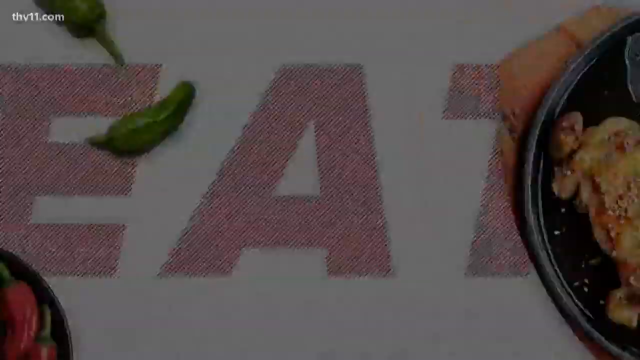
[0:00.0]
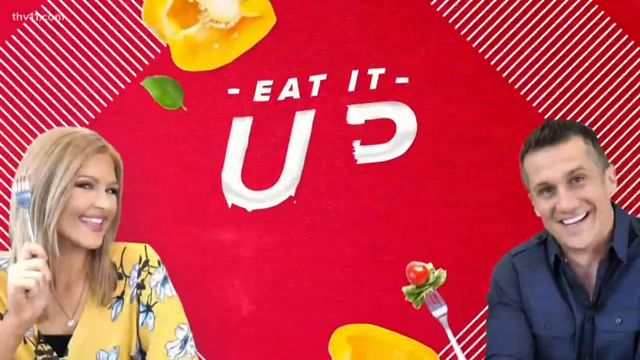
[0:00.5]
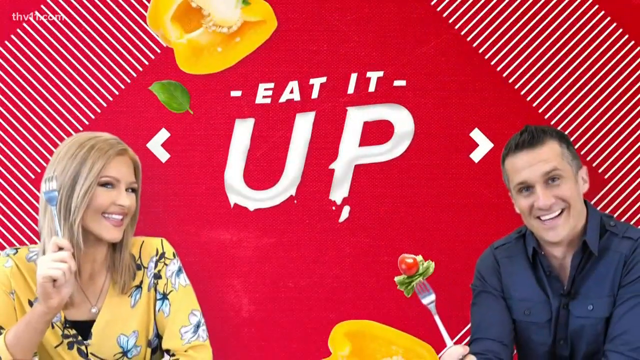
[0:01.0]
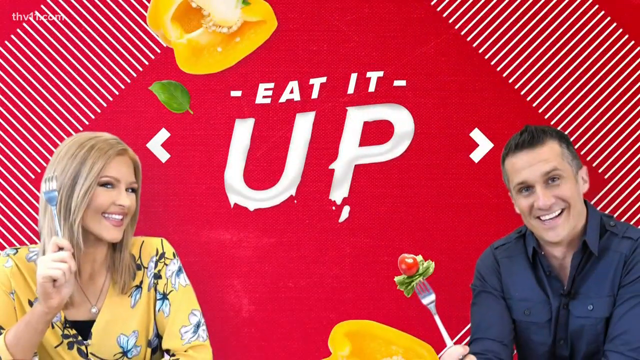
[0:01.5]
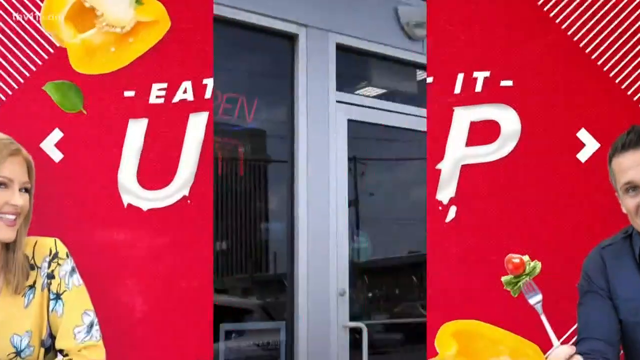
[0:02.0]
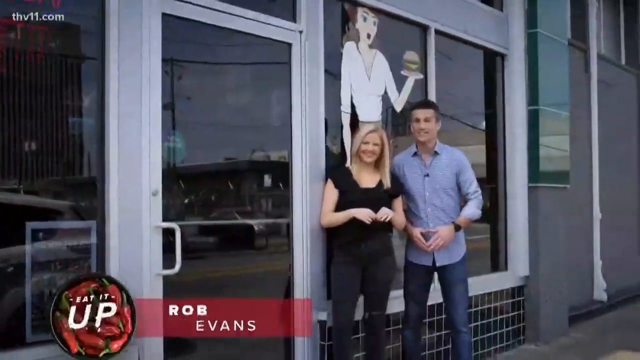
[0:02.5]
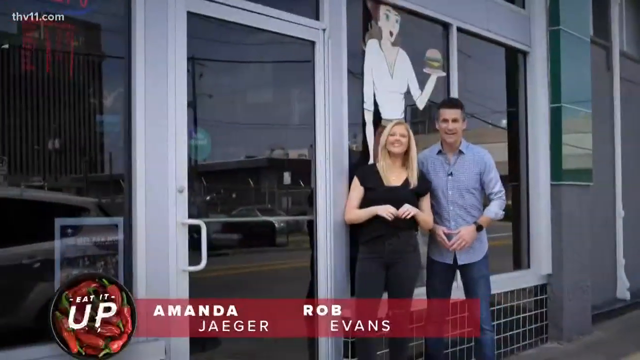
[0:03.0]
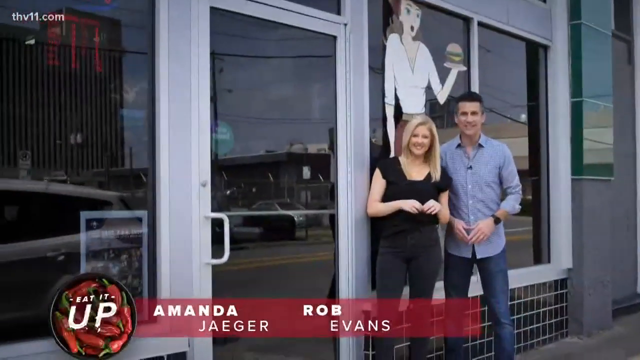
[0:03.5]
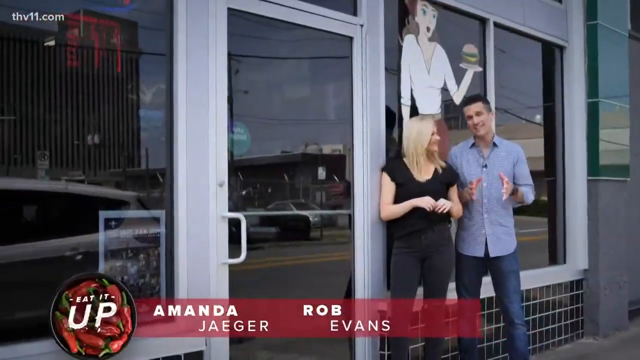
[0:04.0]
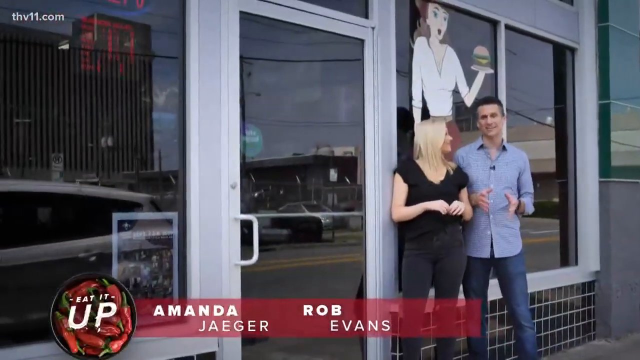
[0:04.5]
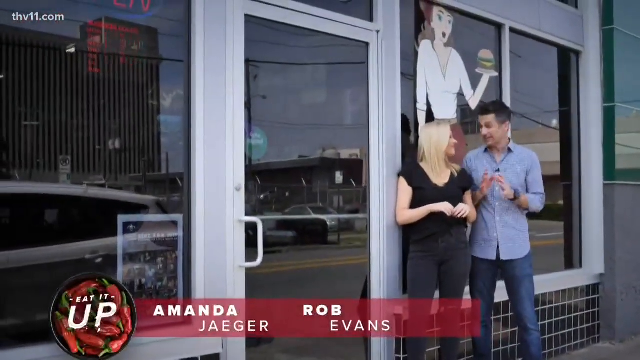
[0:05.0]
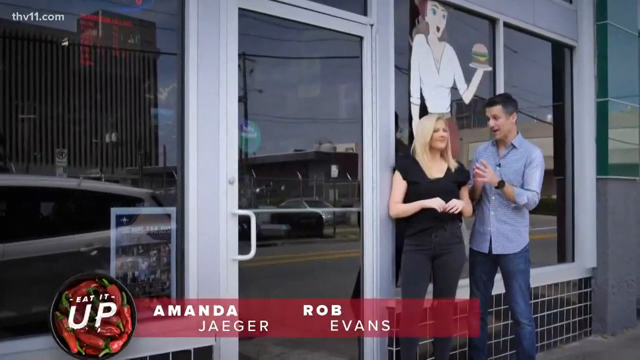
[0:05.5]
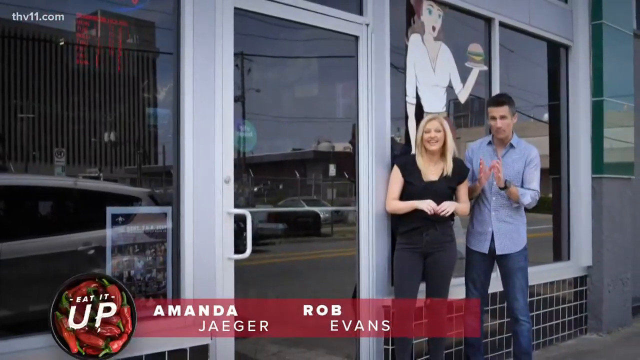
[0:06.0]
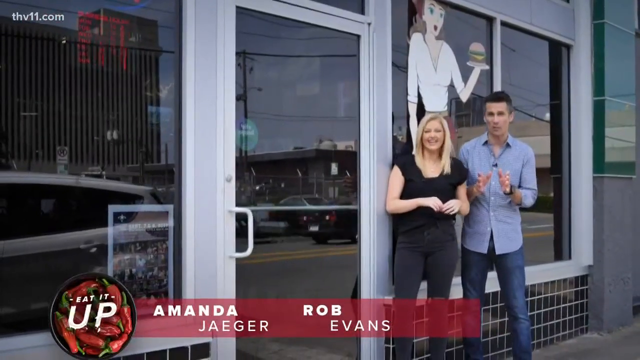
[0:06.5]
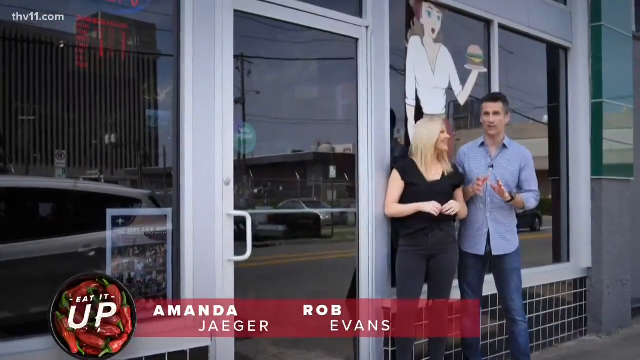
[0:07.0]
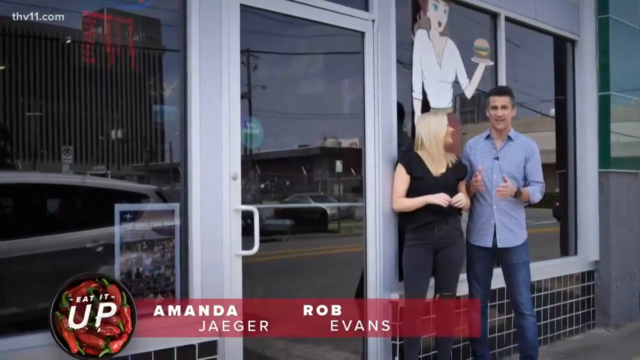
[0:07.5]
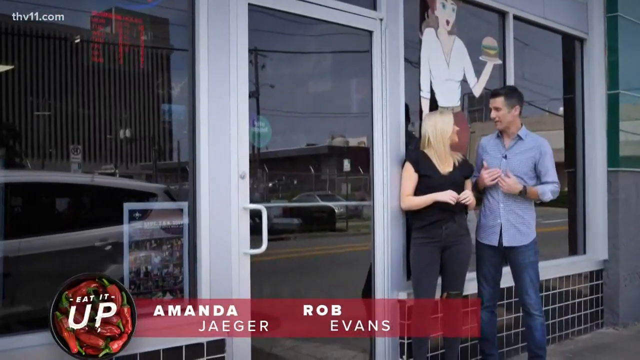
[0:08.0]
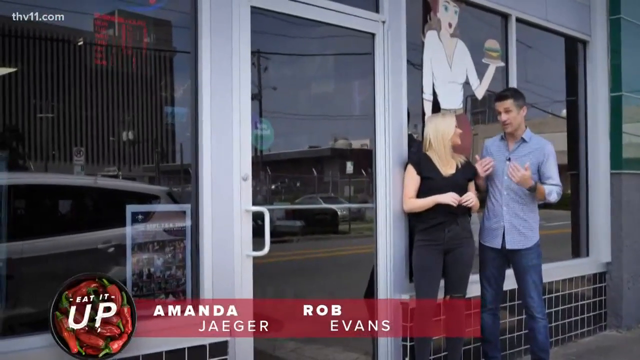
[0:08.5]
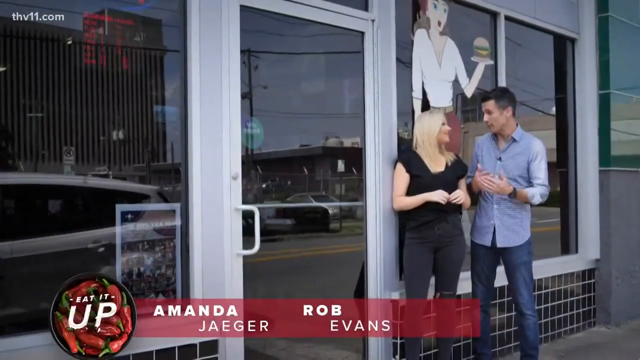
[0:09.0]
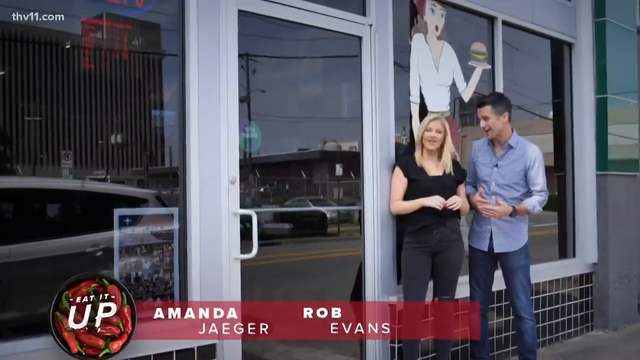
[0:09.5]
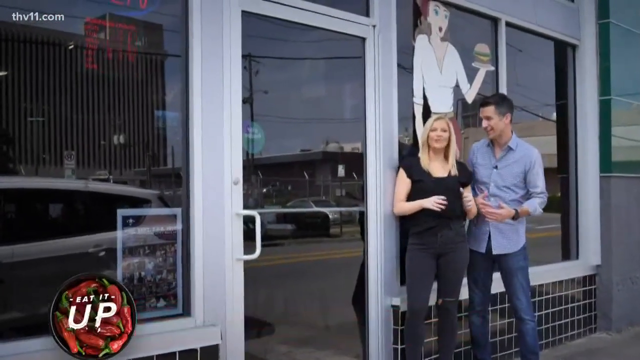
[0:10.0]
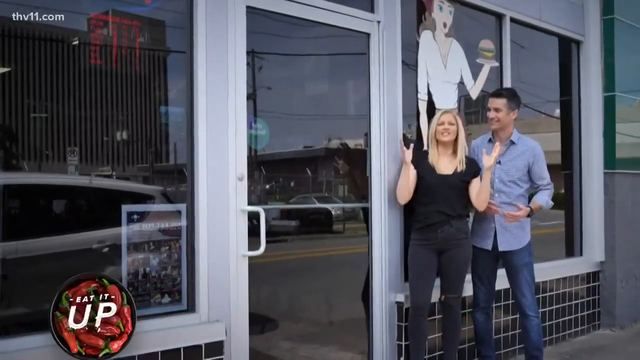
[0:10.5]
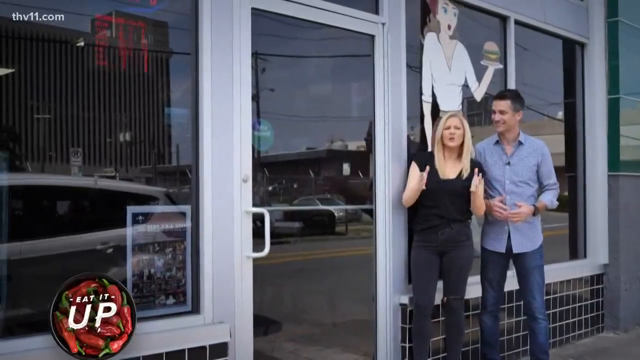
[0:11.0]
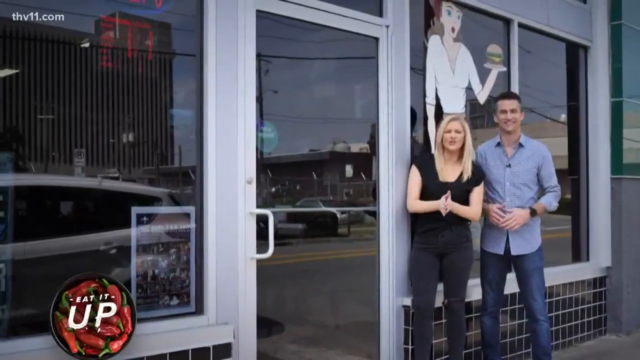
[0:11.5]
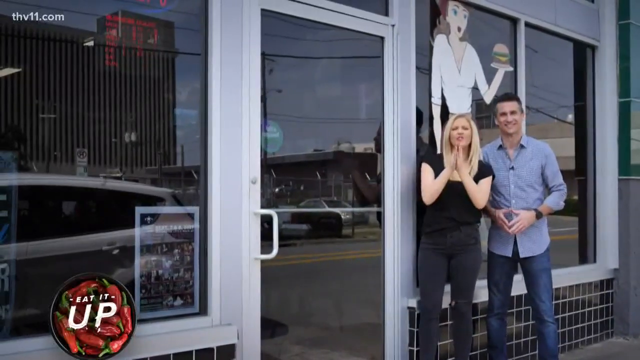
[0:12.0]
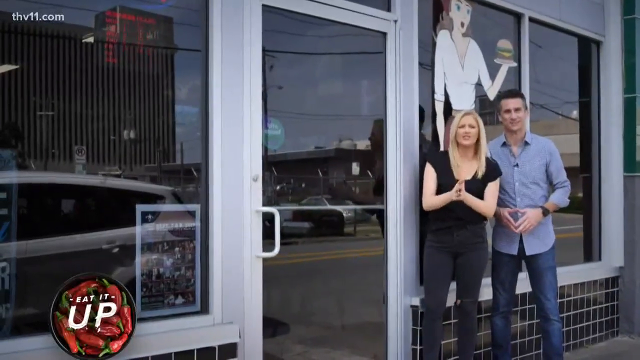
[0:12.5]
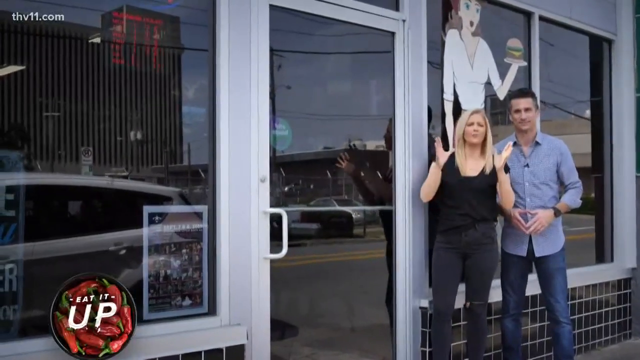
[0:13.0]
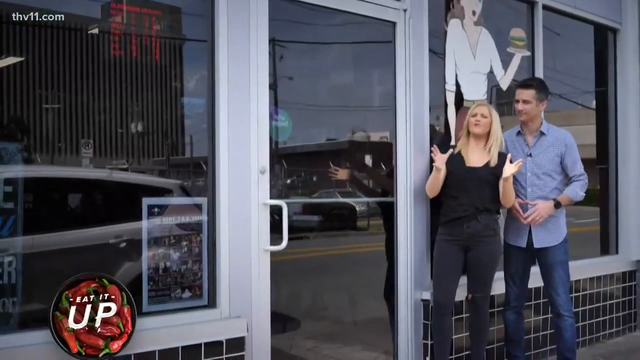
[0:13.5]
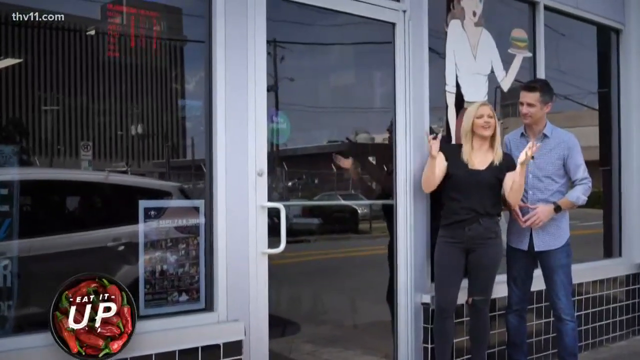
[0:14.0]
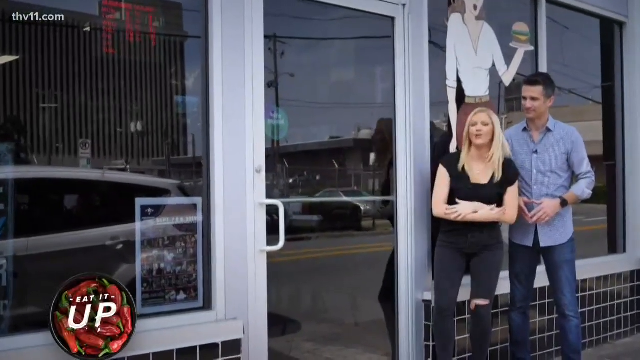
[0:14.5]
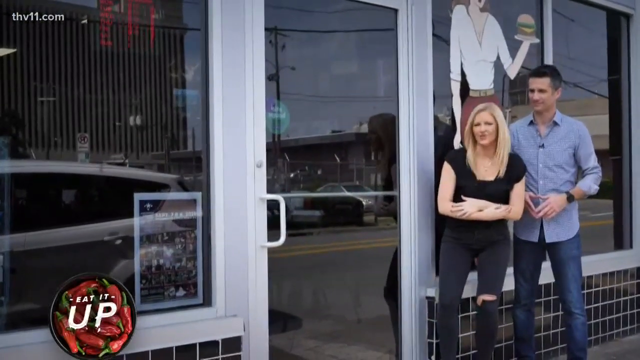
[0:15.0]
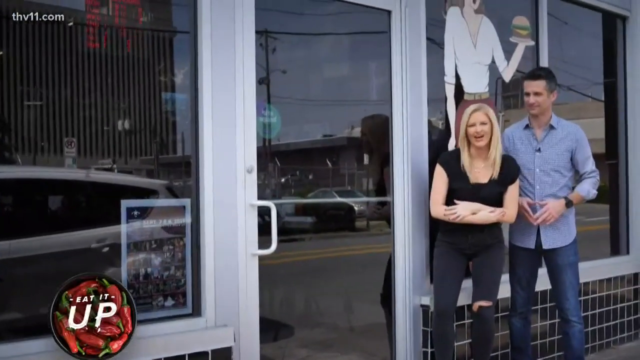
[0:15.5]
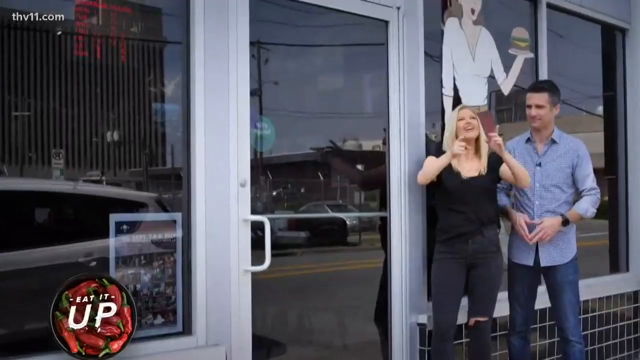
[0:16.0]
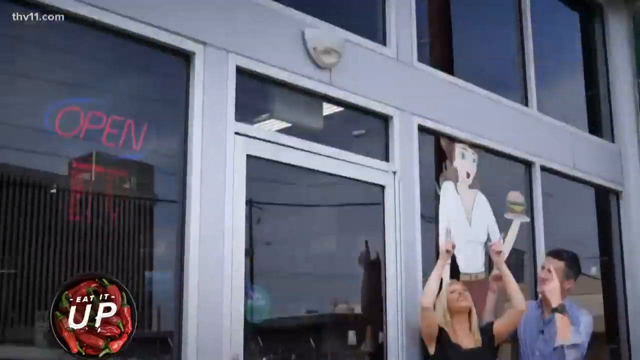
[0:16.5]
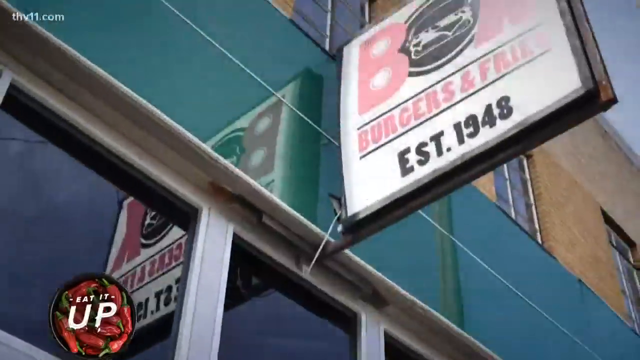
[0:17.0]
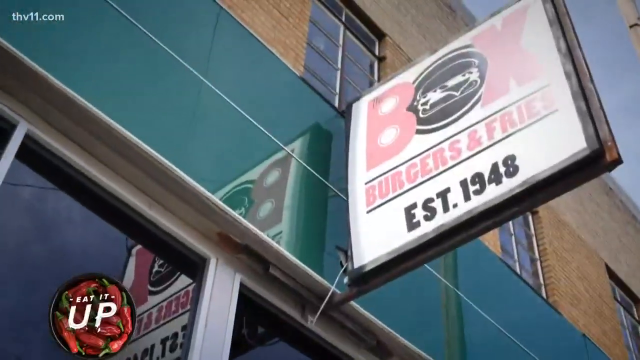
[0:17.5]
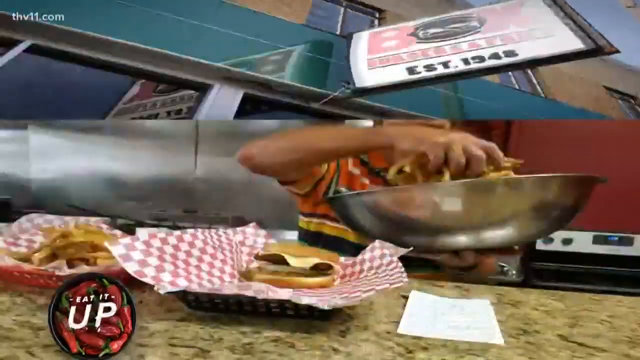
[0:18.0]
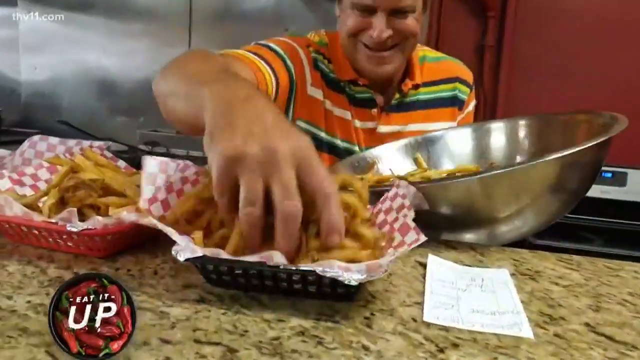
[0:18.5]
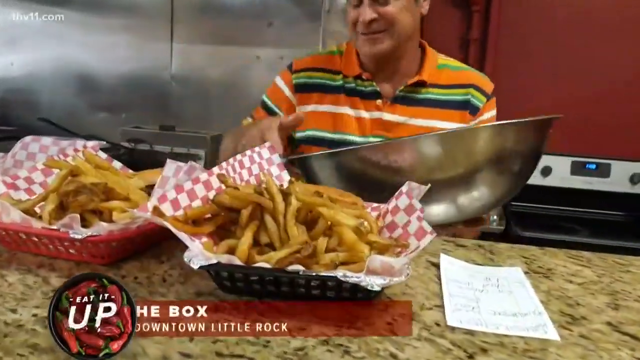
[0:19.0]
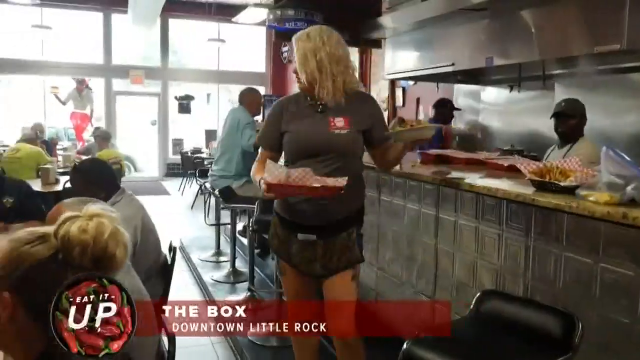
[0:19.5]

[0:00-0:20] Amanda and Rob Evans stand outside a building. Rob wears a blue shirt and blue jeans; Amanda, who has blonde hair, wears a black top and black jeans and looks at Rob as he talks. Their YouTube channel is apparently called Eat It Up. They are advertising a restaurant called The Box, standing outside it and pointing up to show the restaurant's name, and the inside of the restaurant is also shown. The restaurant looks like it makes bagels.